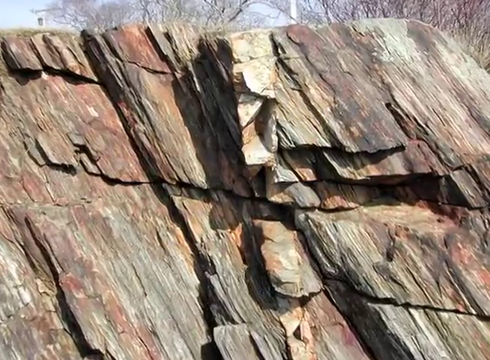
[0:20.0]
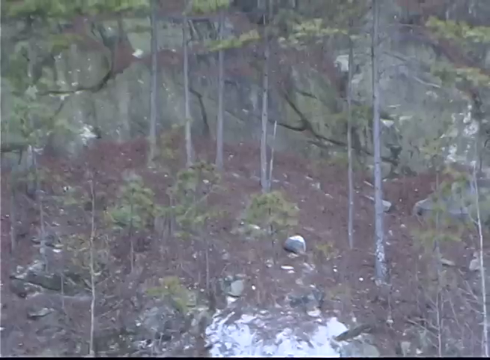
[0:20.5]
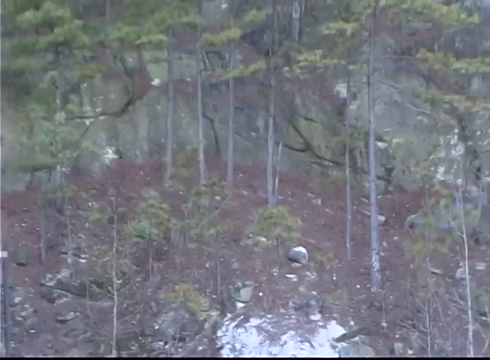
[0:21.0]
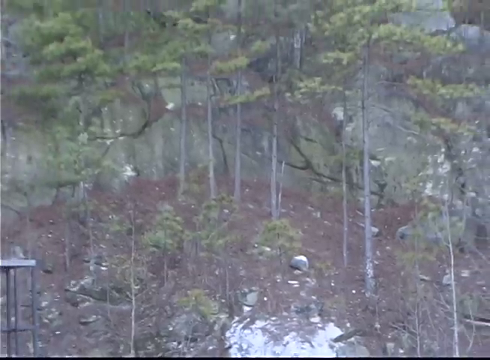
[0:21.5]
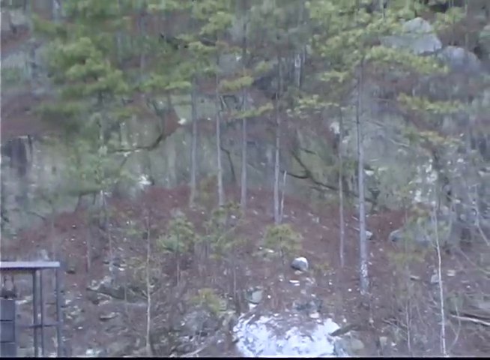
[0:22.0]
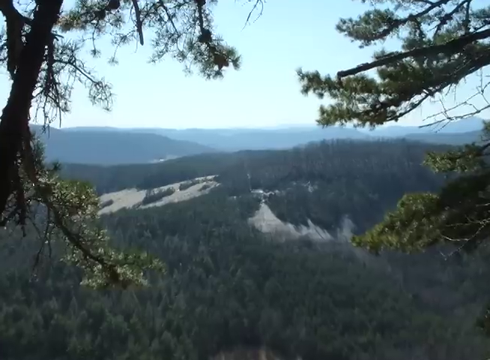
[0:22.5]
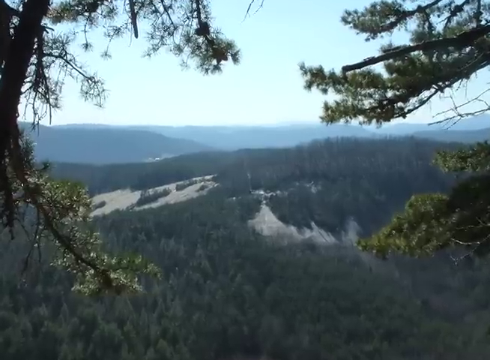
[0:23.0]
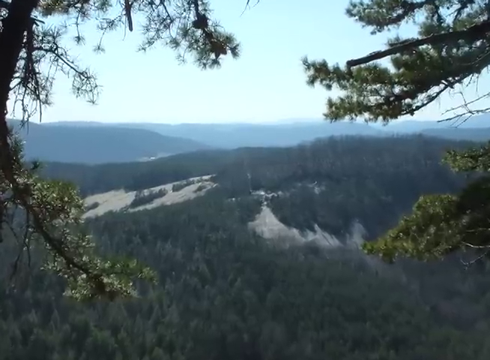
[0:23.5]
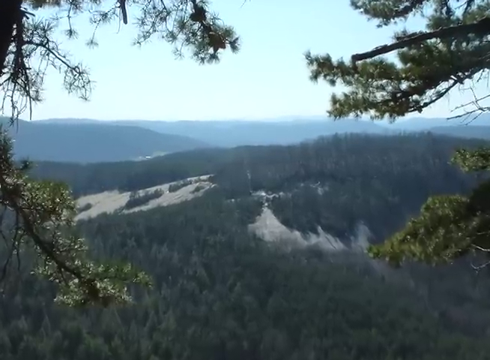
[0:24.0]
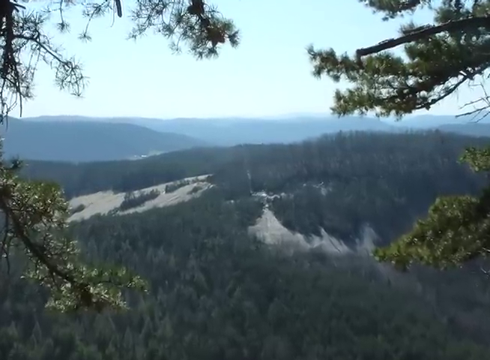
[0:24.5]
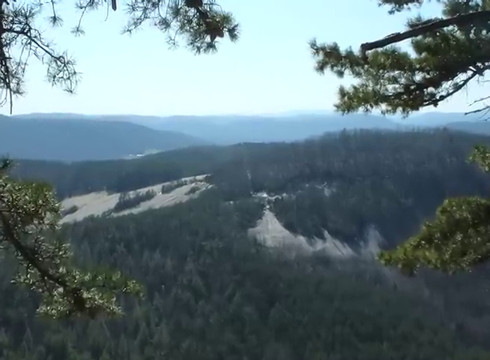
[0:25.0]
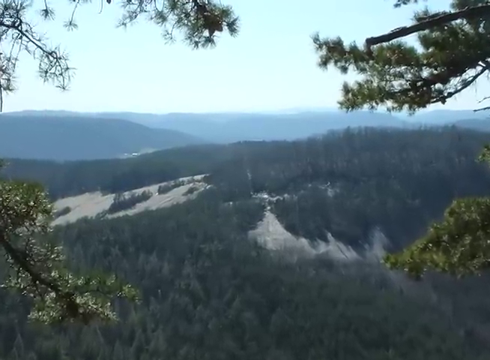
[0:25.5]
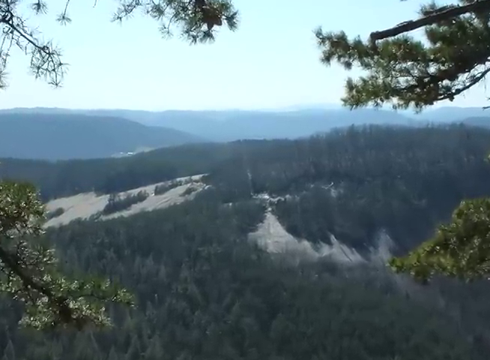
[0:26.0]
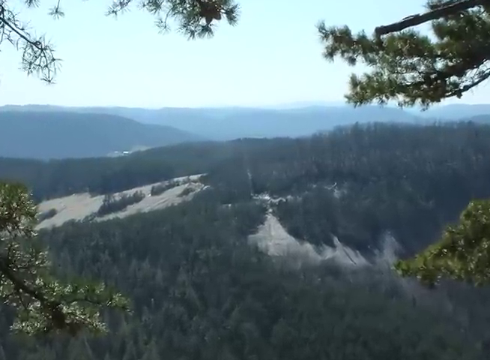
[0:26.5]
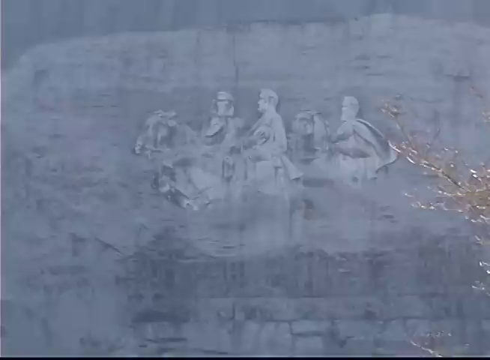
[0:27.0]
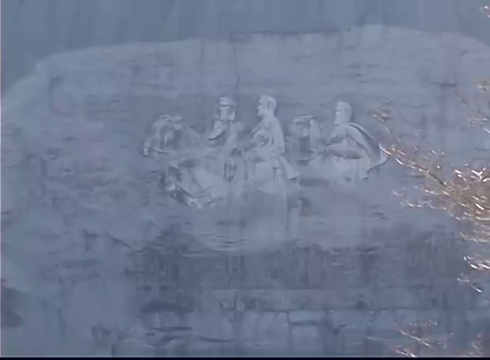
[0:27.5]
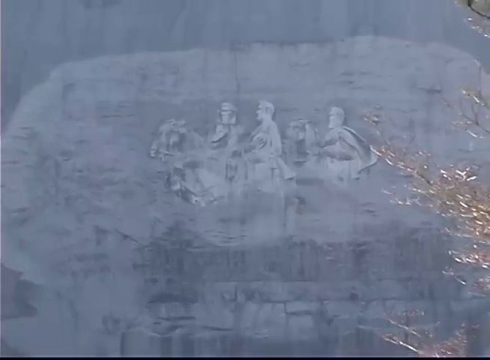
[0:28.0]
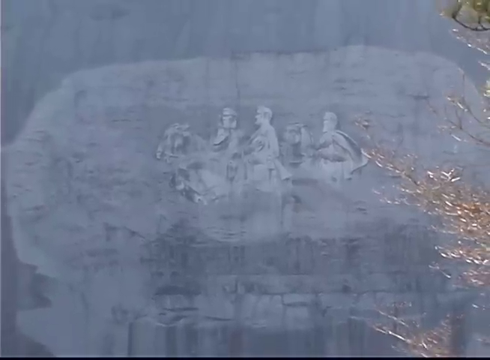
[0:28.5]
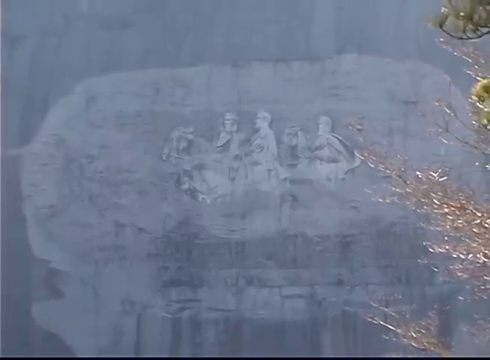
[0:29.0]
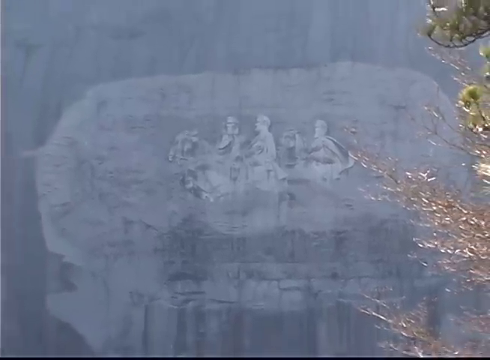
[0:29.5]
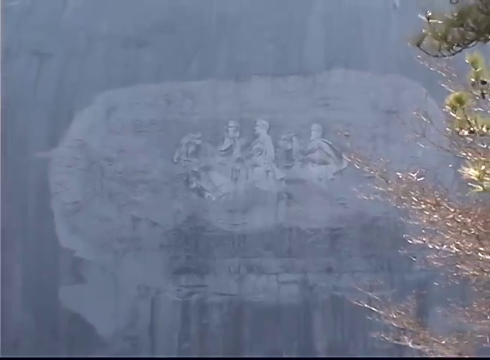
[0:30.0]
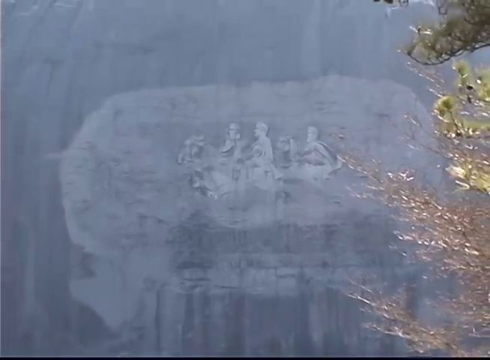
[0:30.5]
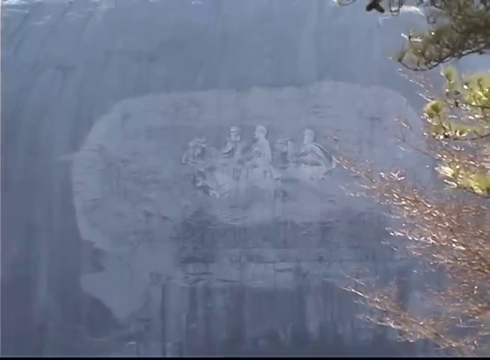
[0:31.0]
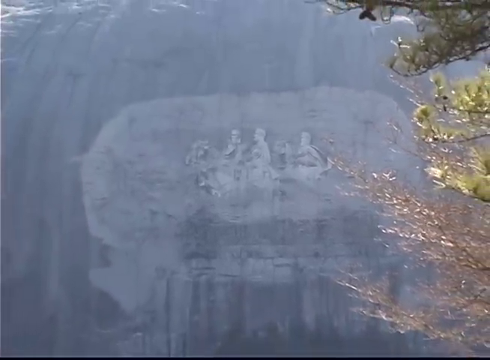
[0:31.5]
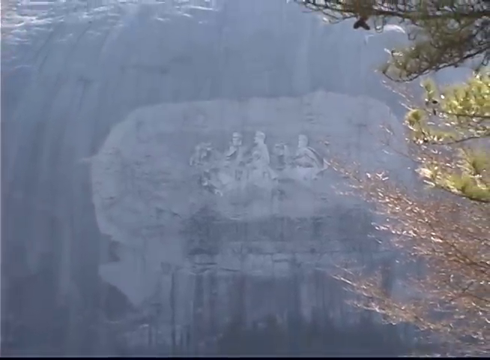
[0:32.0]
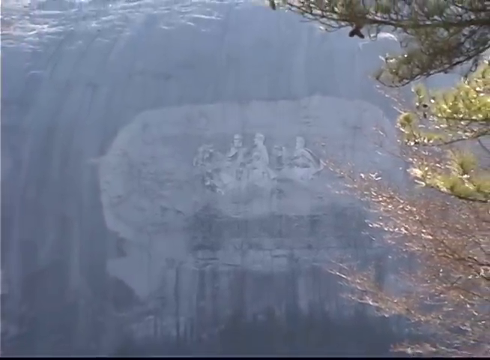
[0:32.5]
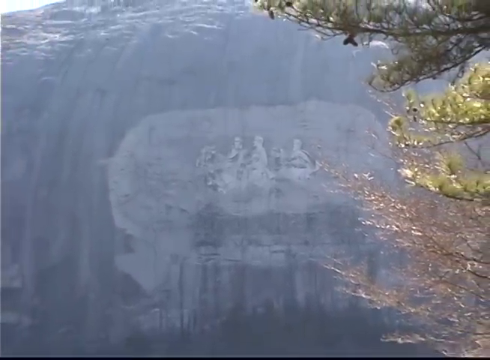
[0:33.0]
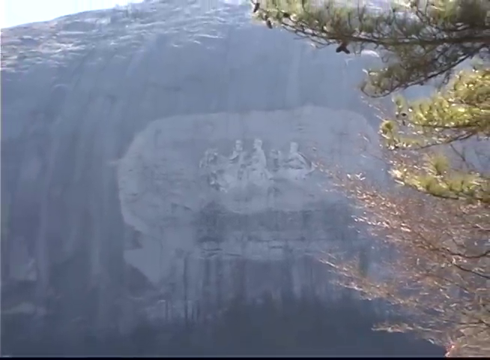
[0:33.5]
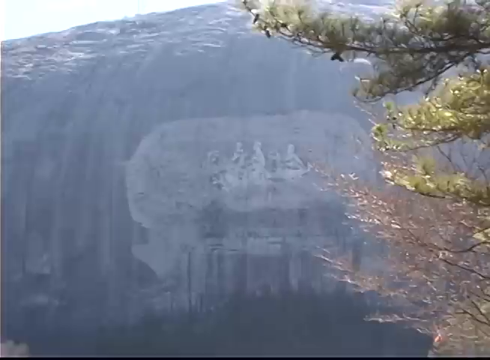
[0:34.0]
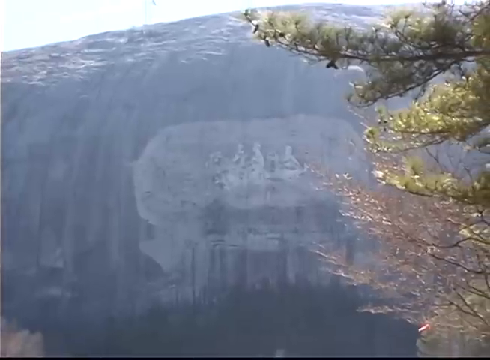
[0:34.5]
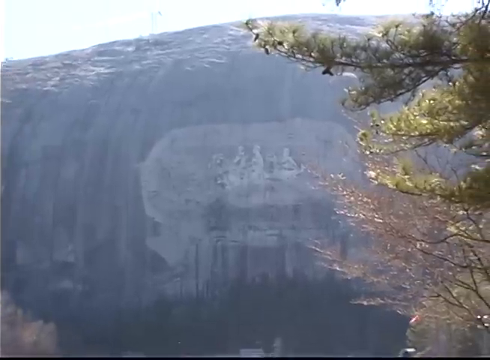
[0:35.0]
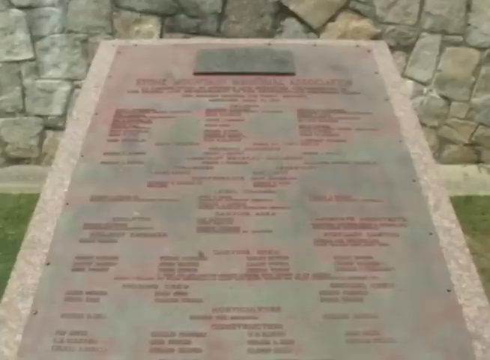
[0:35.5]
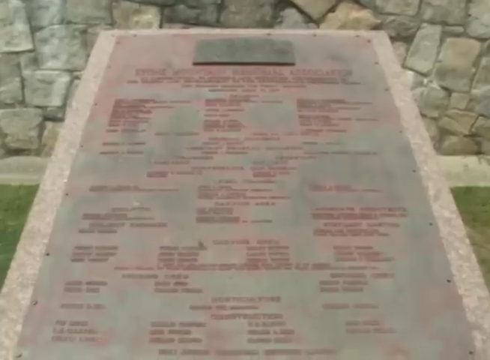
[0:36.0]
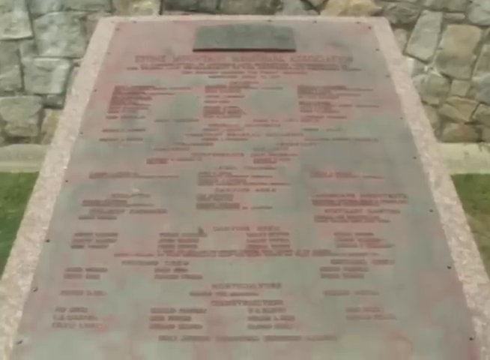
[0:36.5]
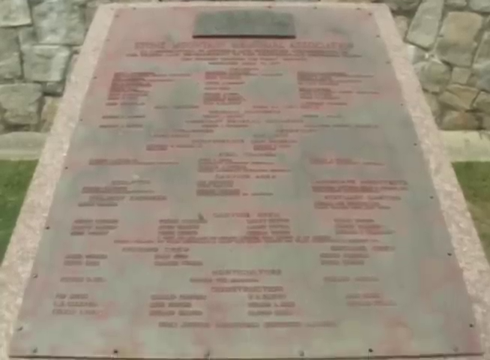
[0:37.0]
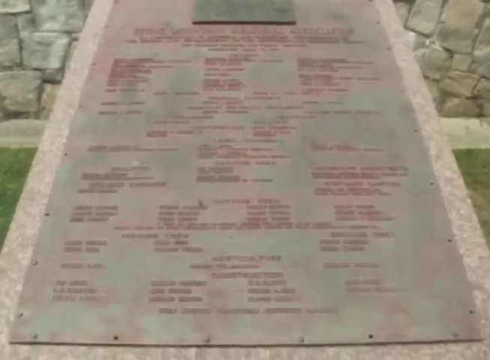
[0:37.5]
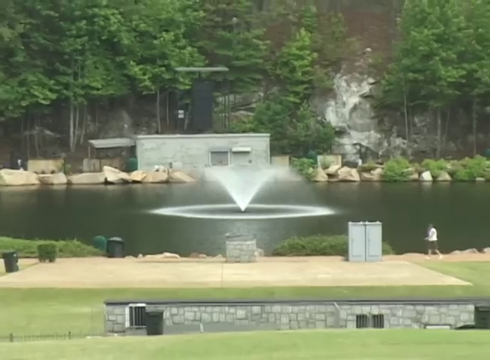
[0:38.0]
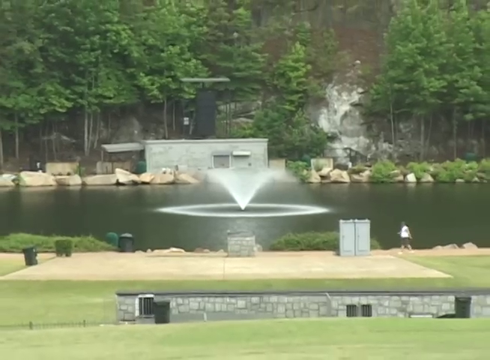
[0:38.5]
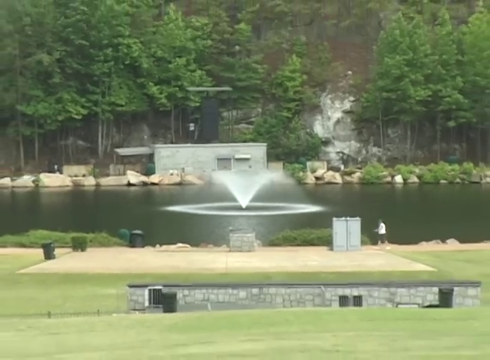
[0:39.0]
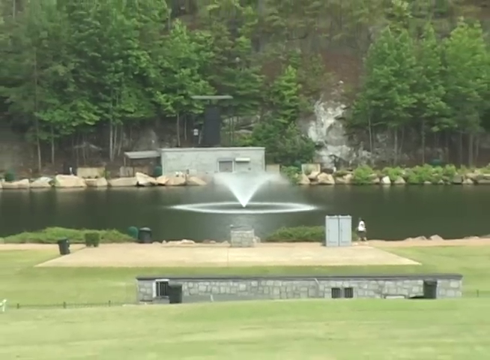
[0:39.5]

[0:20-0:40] The view moves on from the stone slab with its fish-scale-looking rock formation to another view, then switches again to a kind of high-elevation view with trees, a mountainous region in the distance and a horizon line. The sky is blue, and the sun is possibly either rising or setting. More trees are visible in the rock formation. A picture of what looks like it could be a horse with two or three men riding appears to be carved into the rock formation. Next a stone slab with names on it appears; this may be a park. Behind the written stone slab, a bunch of rocks form a rock wall, with trees in the background. From this view there is a small building, a pond with water splashing from a machine that sprays water up into the air, more stone slabs, and one person walking.